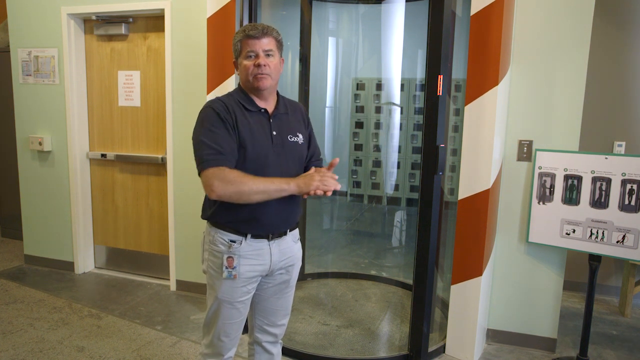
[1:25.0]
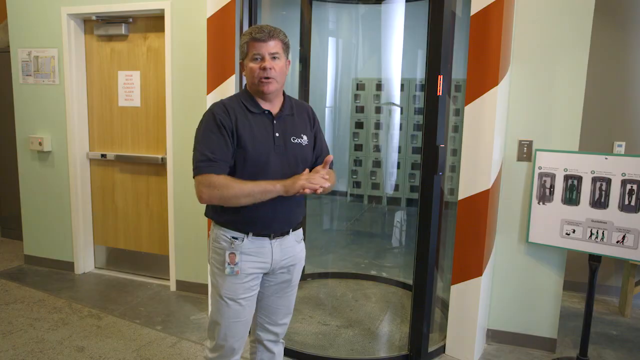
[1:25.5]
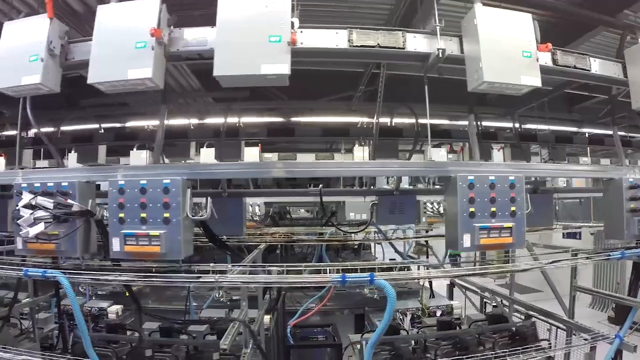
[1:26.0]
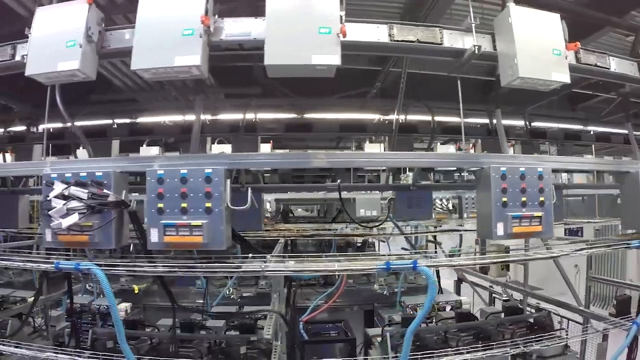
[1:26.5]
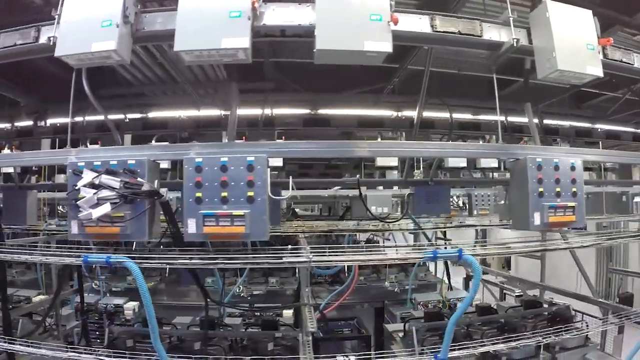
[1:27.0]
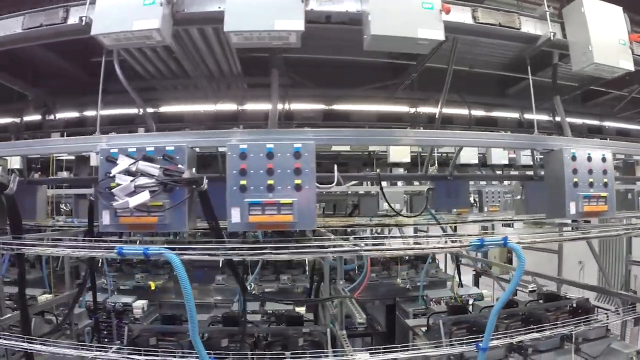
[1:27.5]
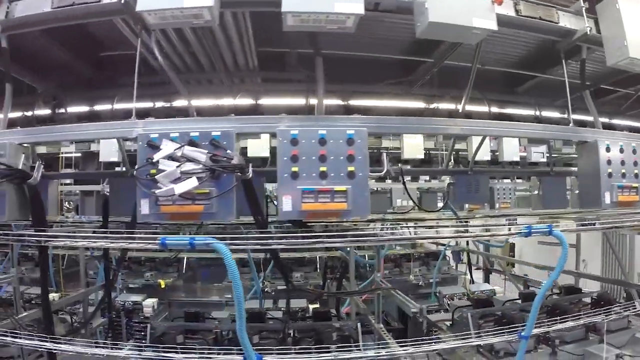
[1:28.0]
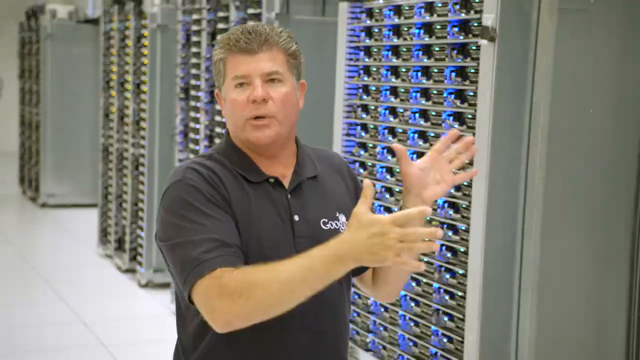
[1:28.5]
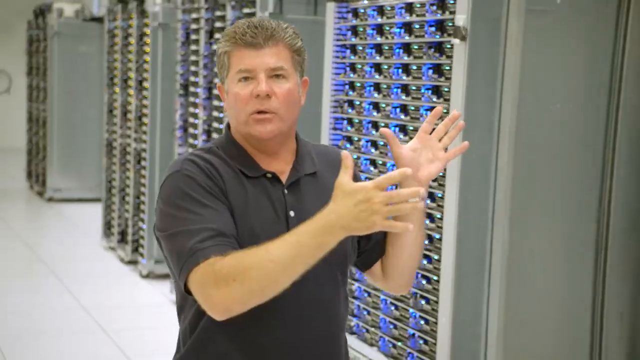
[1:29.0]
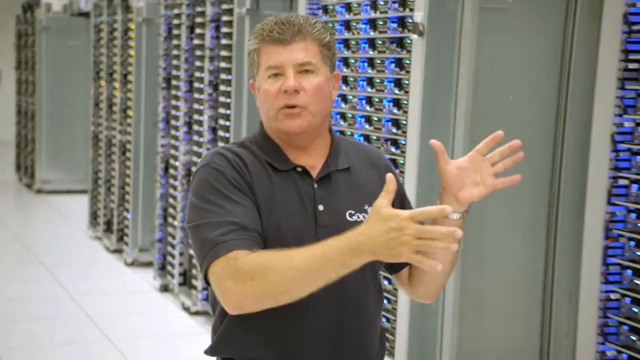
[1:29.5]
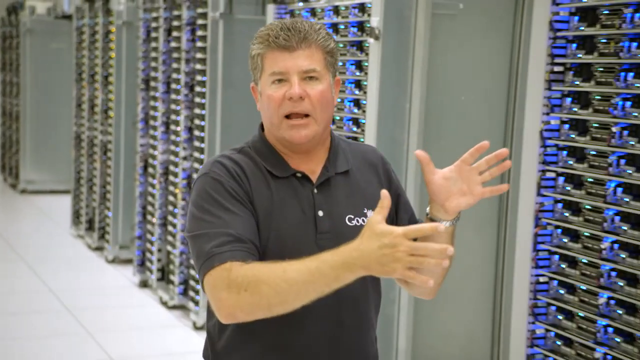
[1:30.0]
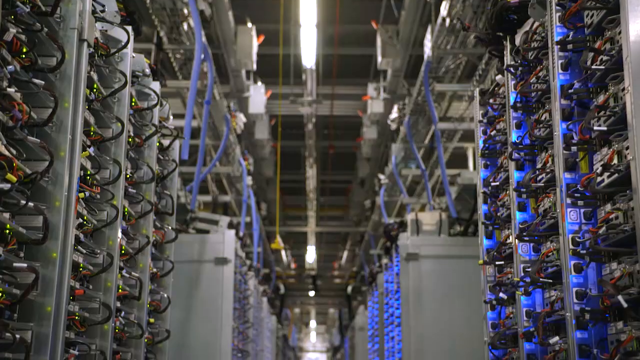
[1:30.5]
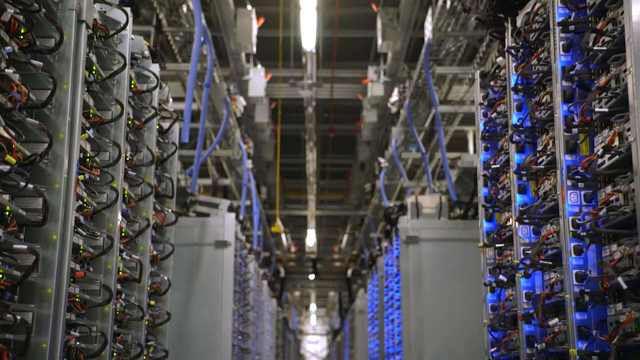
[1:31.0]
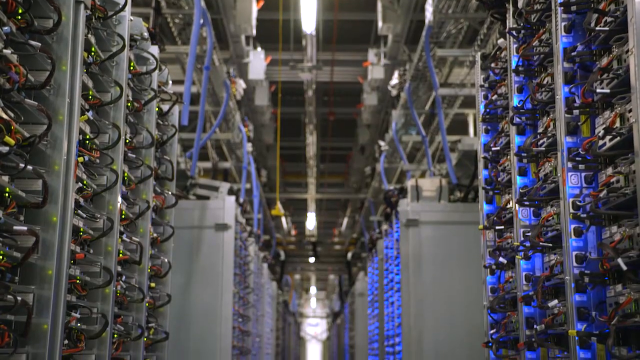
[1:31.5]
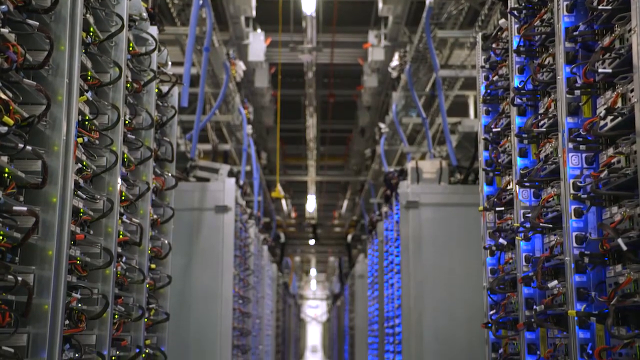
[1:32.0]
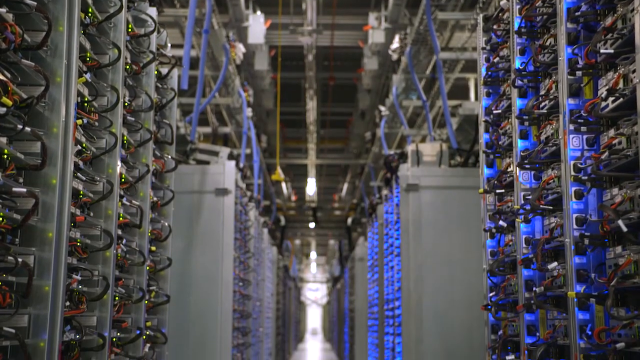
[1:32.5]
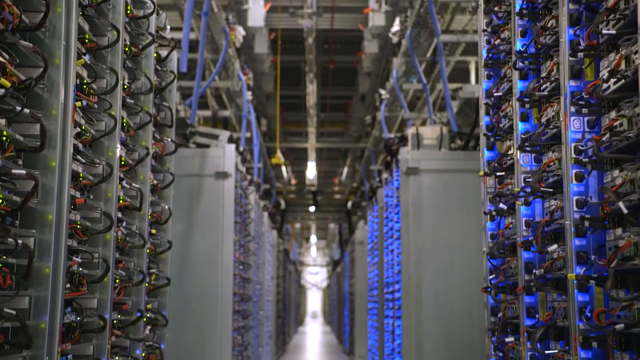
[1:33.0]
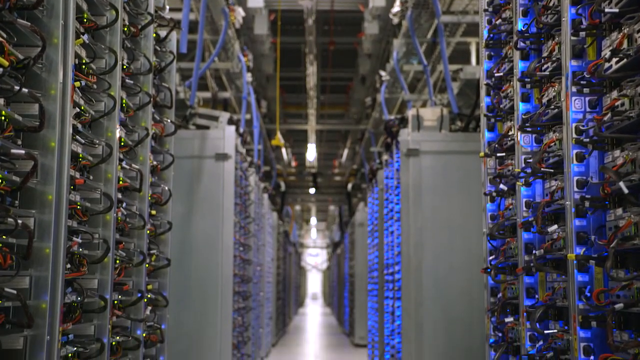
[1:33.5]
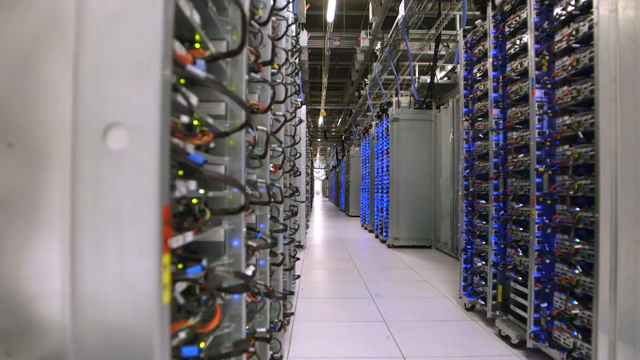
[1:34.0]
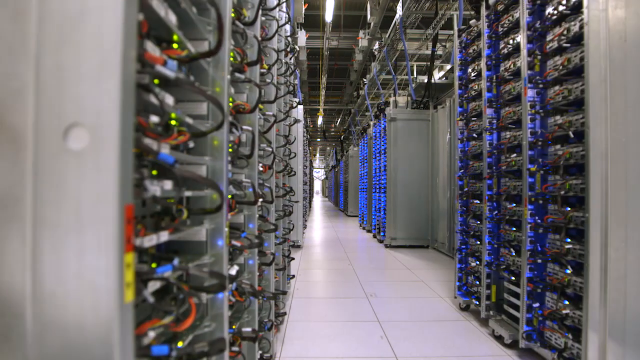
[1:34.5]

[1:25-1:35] The man is still standing, dressed the same and wearing his badge, beside the odd little tube, gesturing and talking. He then walks around a new room with more wires and hardware, gesturing with his hand. The equipment, possibly modems, is everywhere. The rooms are empty; no one else appears, just him, as he walks around and gestures. The rooms look very high-tech.